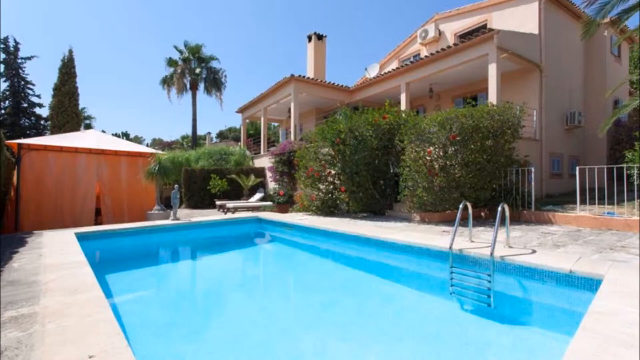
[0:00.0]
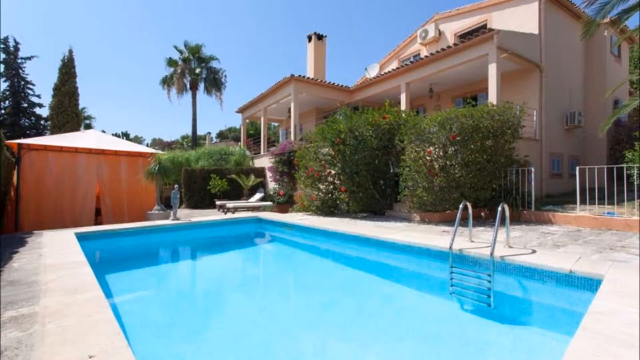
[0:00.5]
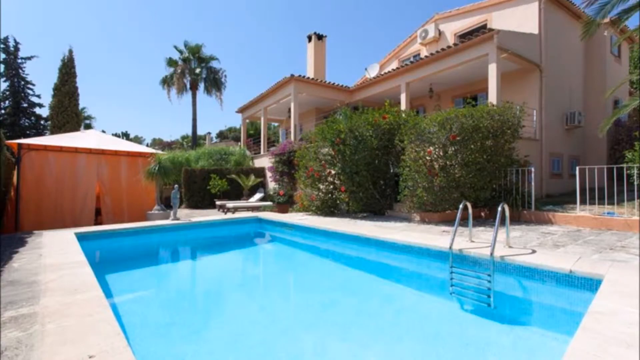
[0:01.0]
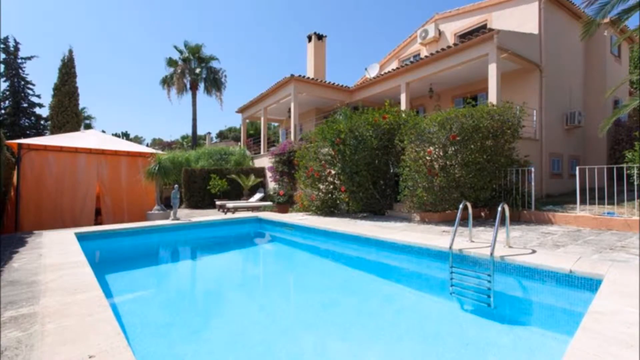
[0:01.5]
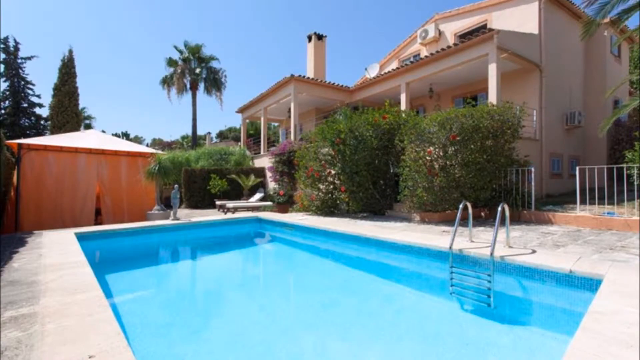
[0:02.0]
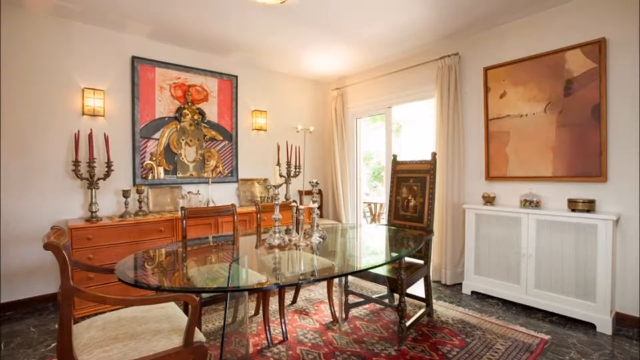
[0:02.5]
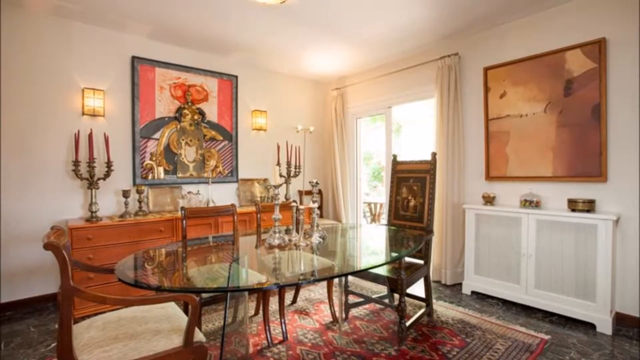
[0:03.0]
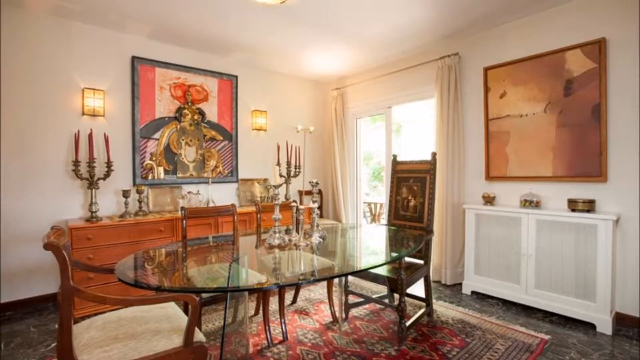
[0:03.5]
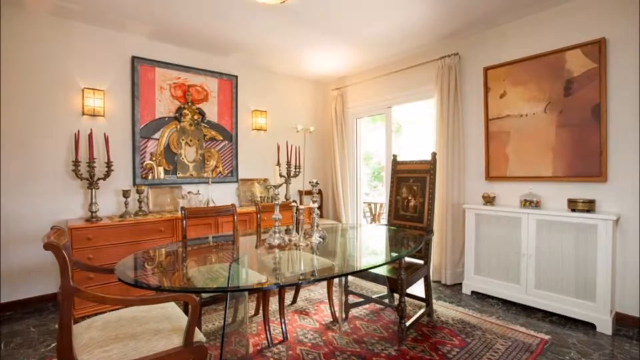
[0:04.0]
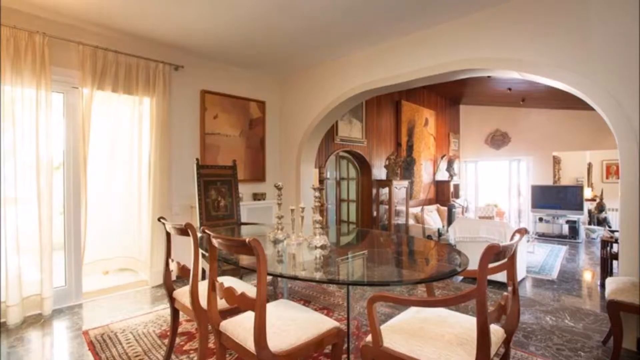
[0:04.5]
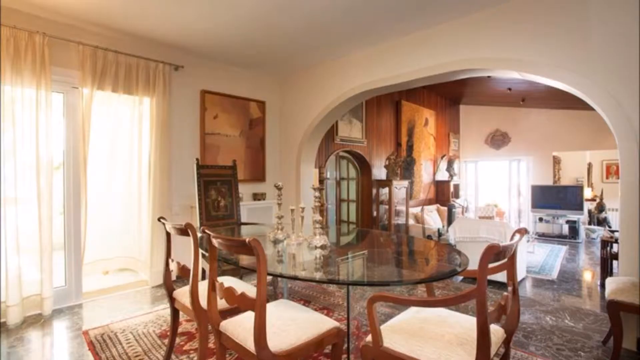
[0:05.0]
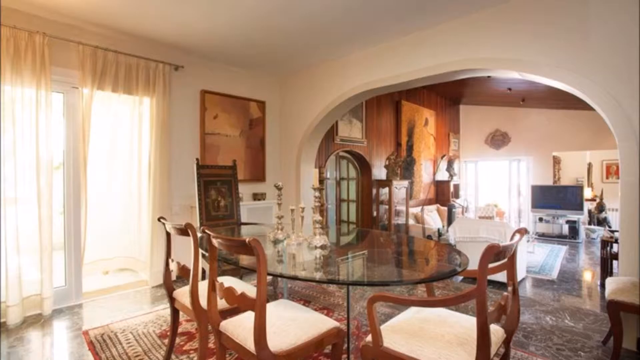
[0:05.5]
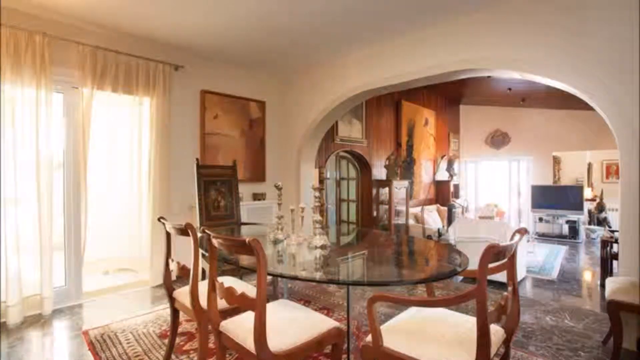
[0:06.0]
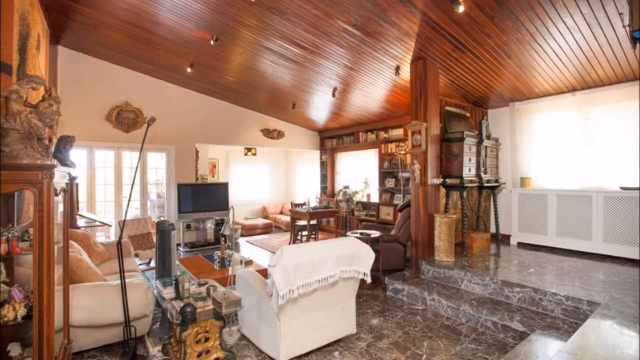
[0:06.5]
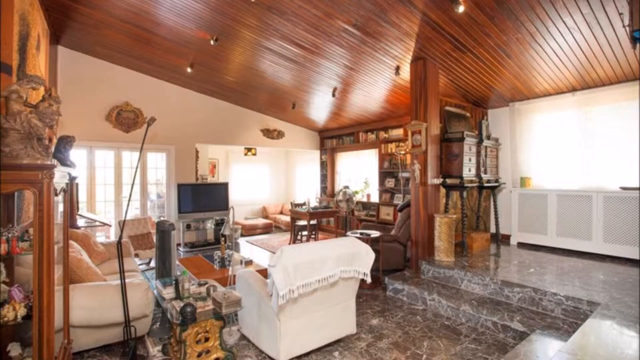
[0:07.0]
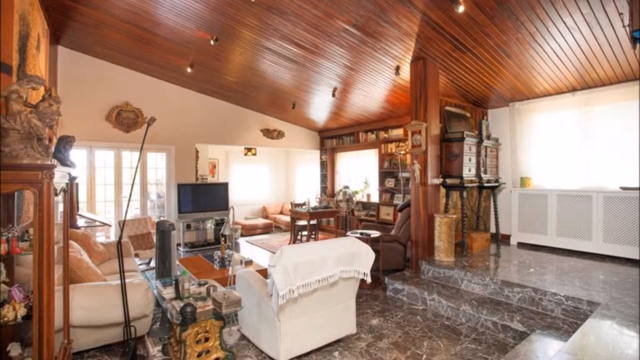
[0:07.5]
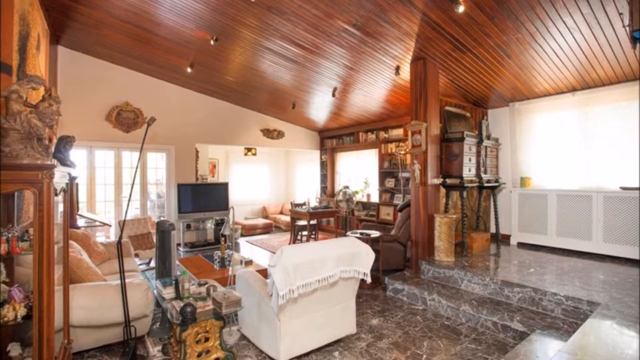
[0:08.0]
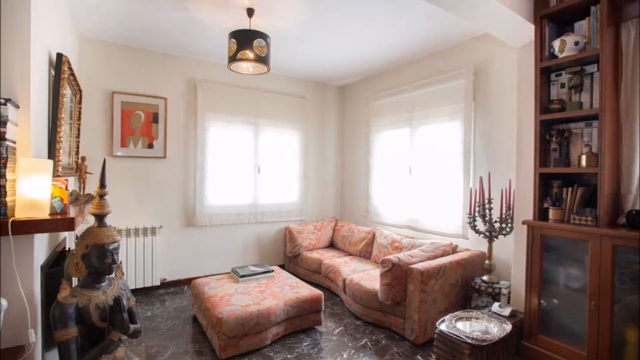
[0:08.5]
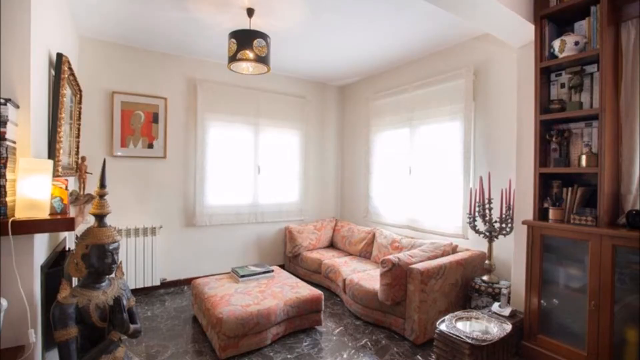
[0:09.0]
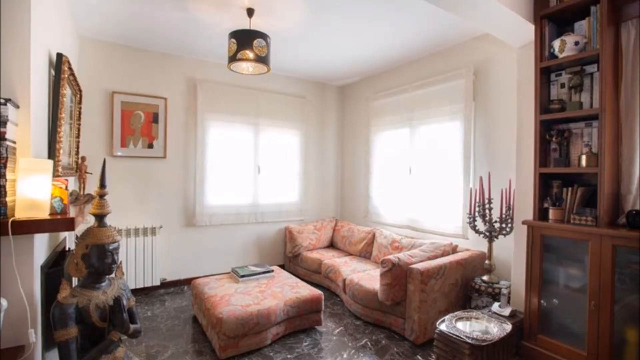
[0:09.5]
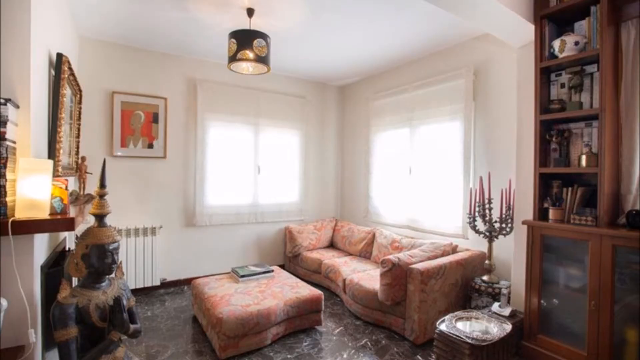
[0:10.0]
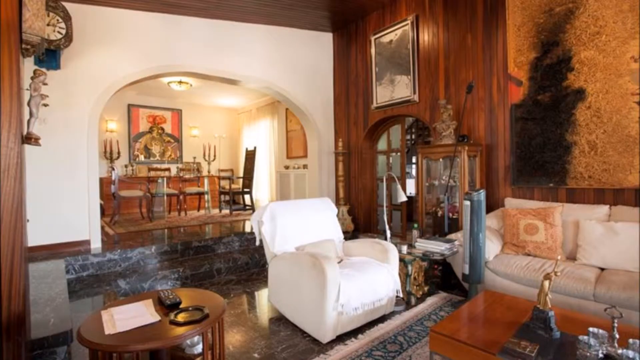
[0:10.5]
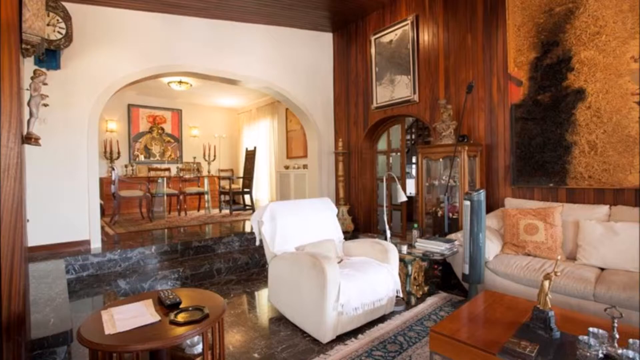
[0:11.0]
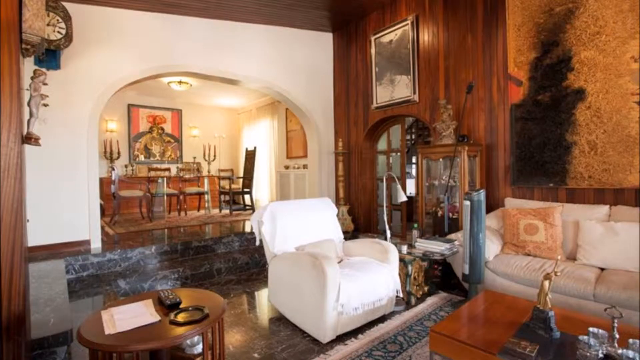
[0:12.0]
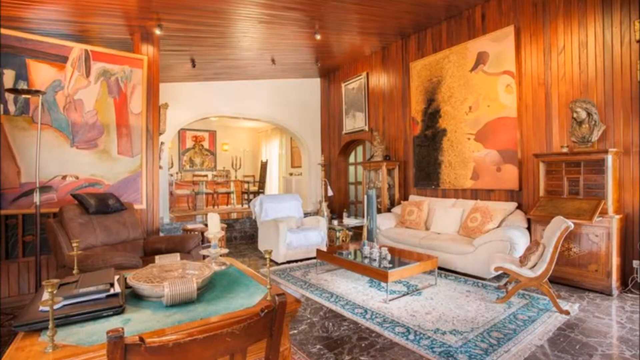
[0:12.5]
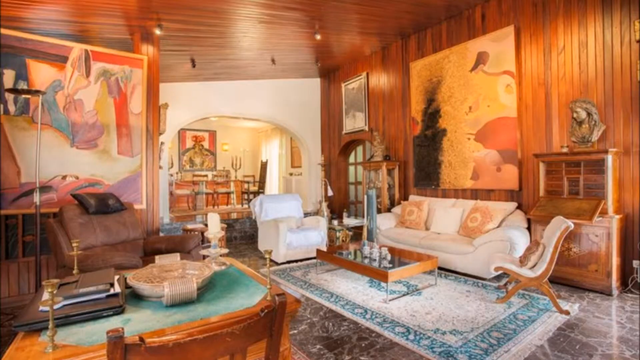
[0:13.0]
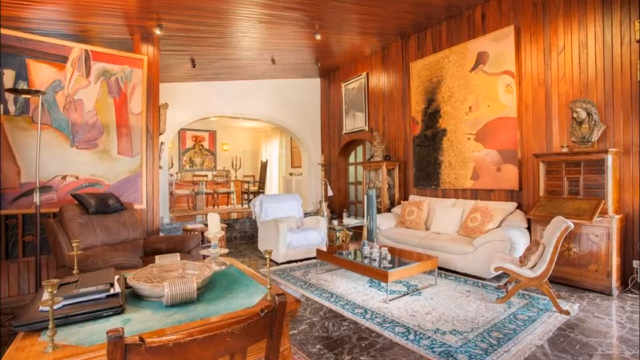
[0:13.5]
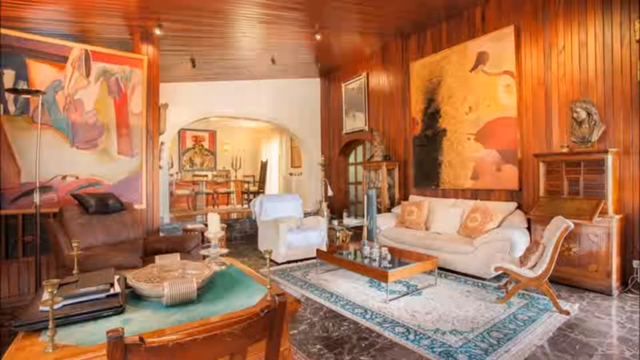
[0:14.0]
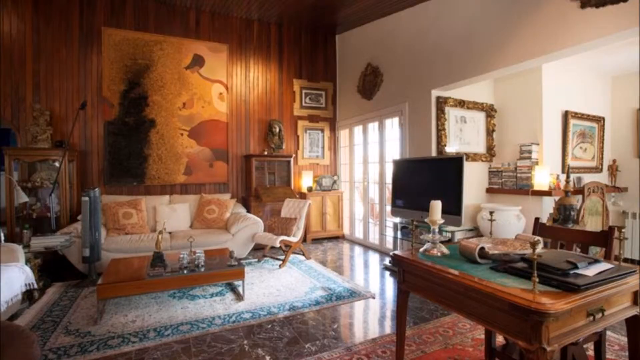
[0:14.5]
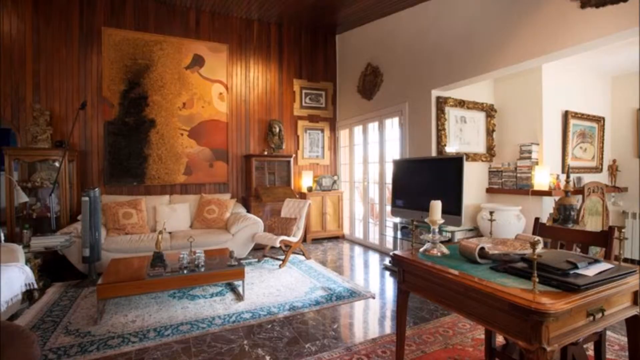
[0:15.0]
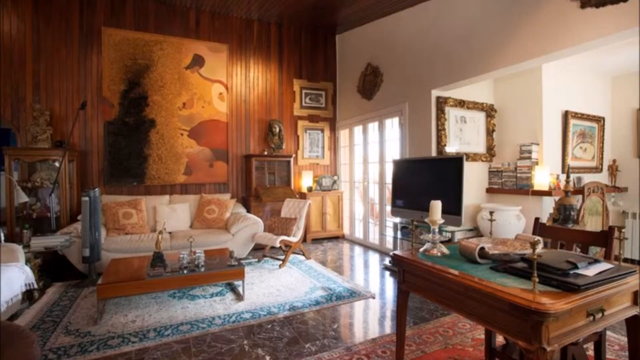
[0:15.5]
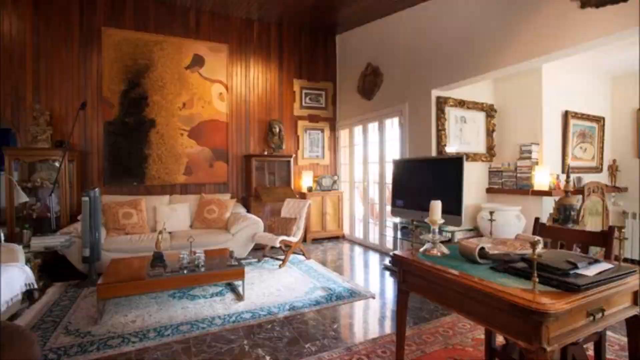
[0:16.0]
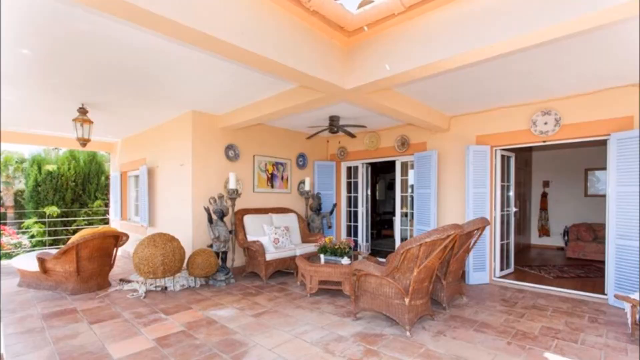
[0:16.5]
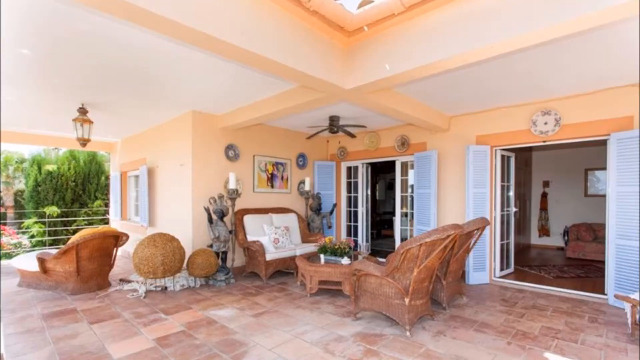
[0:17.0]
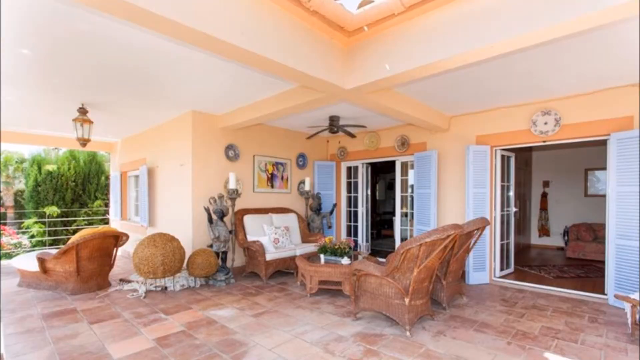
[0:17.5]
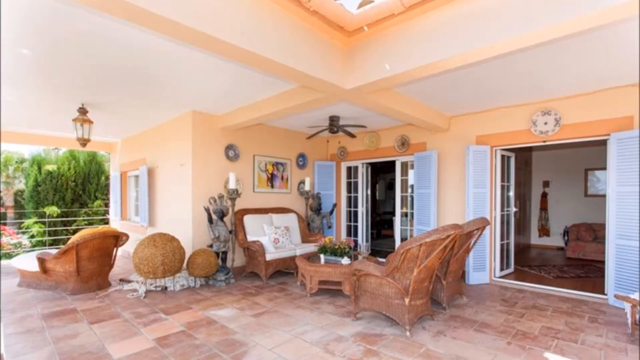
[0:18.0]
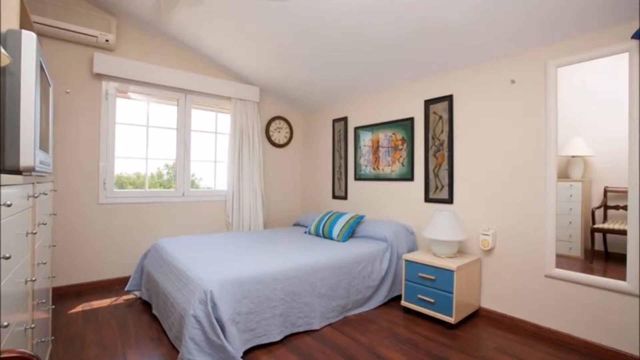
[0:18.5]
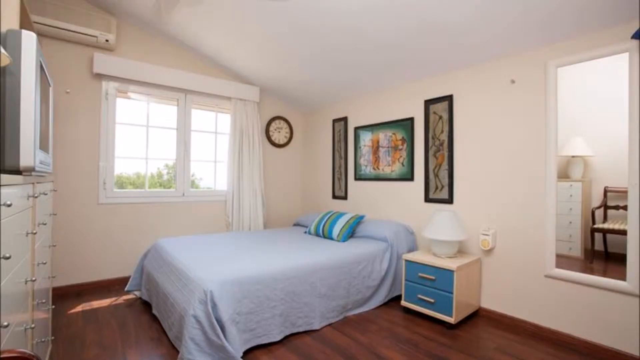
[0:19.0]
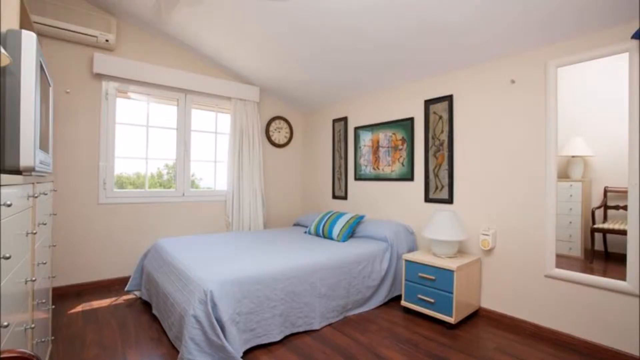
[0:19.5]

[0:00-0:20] An outdoor pool appears, followed by what looks like a dining room with a glass table. A different view of the dining room shows the glass table with some chairs around it, and off in the distance to the right is what looks like a living room with a TV. The scene changes to a different view of the living room, with the TV and couches around it. Next comes what looks like either a bedroom or a guest room, with an ottoman in the center and a three-seat couch. What appears to be the same room then shows a white recliner in the middle with a coffee table in front of it. A zoomed-out version shows the white recliner, the coffee table in the middle, and a two-seat couch to the right side. What looks like another alternate view of this room shows a TV in the center to the right and a couch to the left. The scene then changes to what looks like an outdoor view of the patio or backyard, and then to a bedroom with a bed in the middle and a window to the left side.